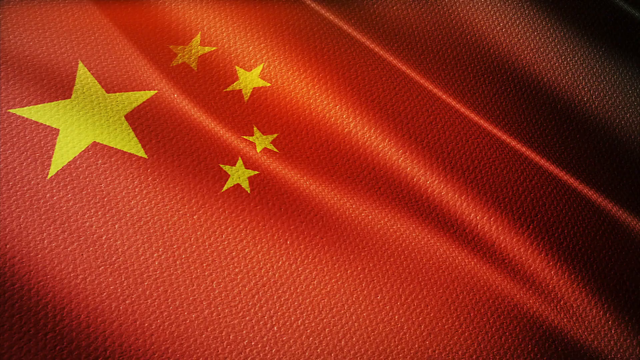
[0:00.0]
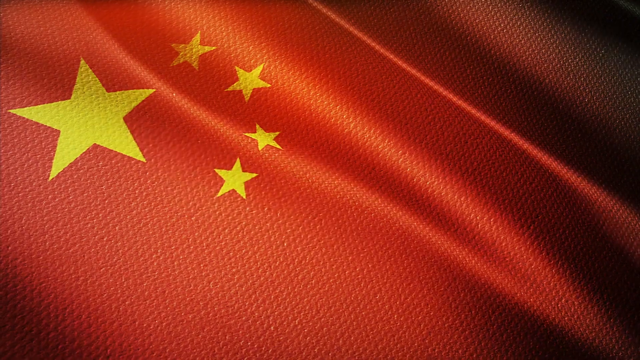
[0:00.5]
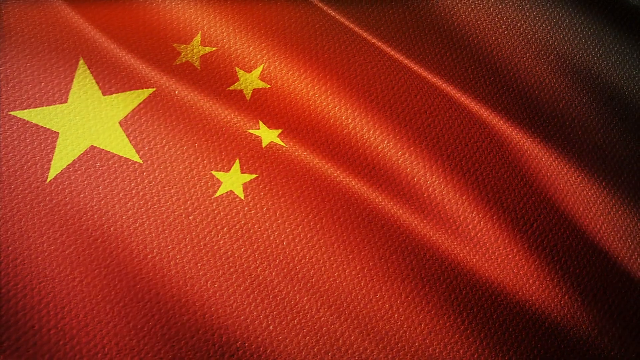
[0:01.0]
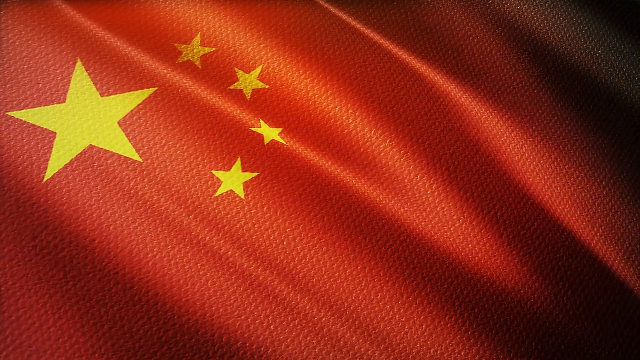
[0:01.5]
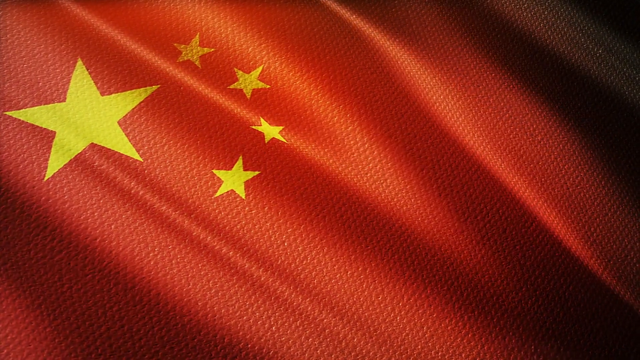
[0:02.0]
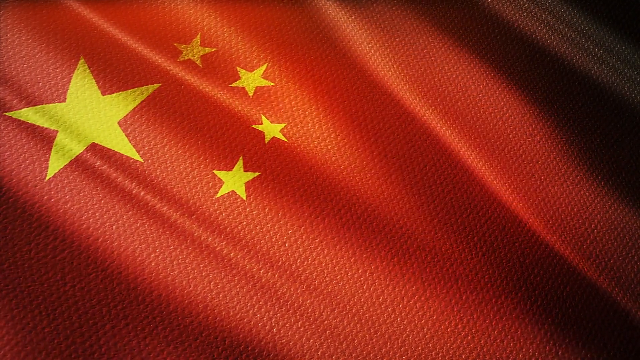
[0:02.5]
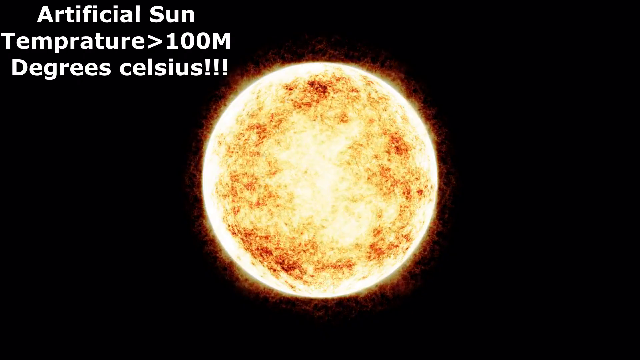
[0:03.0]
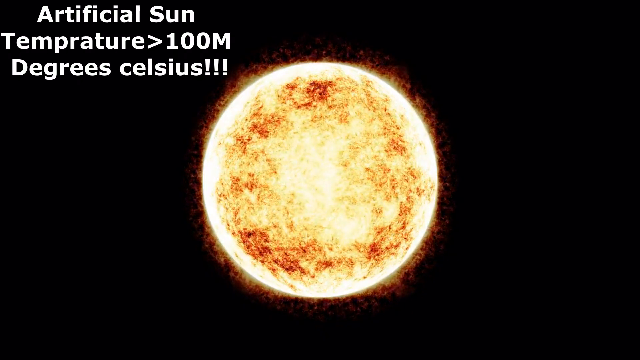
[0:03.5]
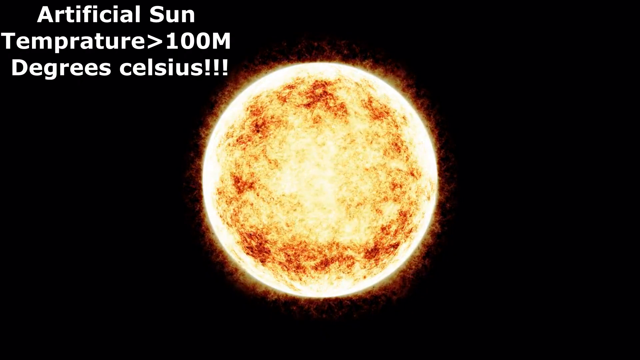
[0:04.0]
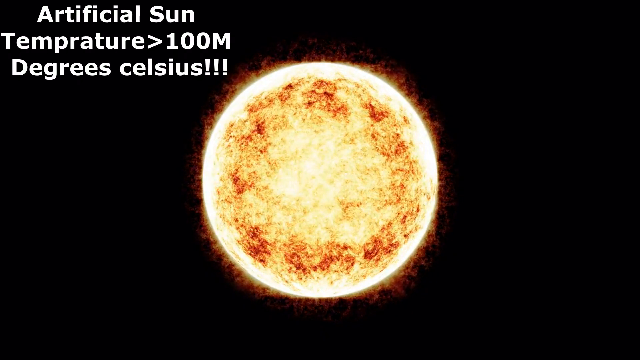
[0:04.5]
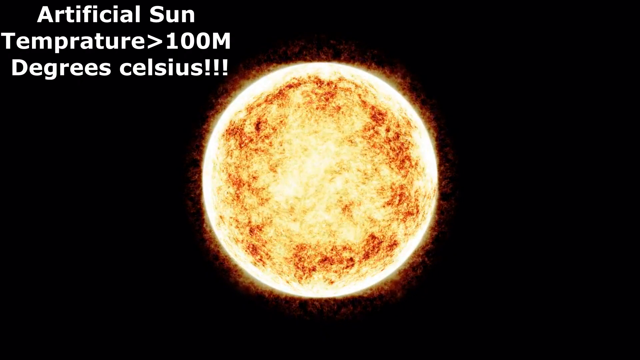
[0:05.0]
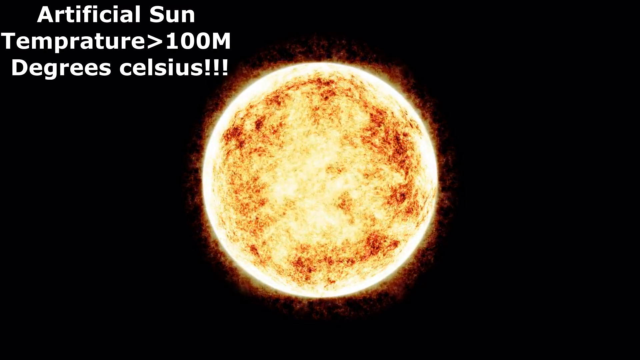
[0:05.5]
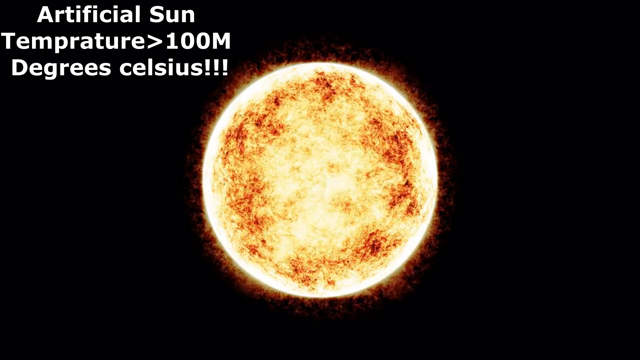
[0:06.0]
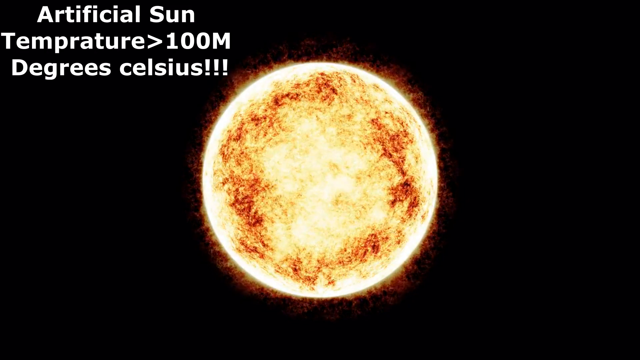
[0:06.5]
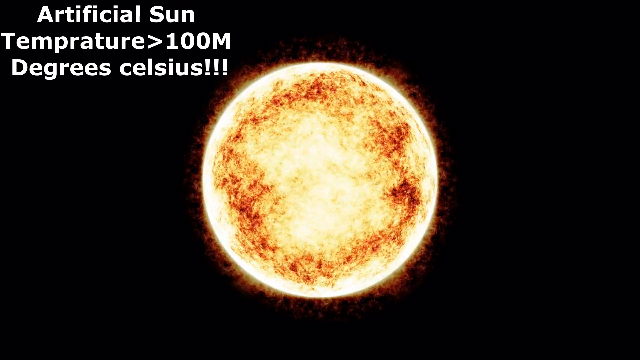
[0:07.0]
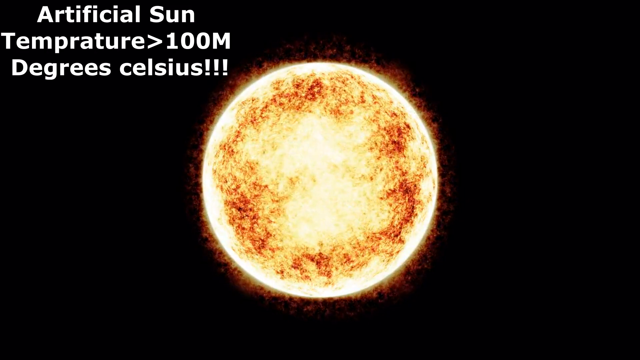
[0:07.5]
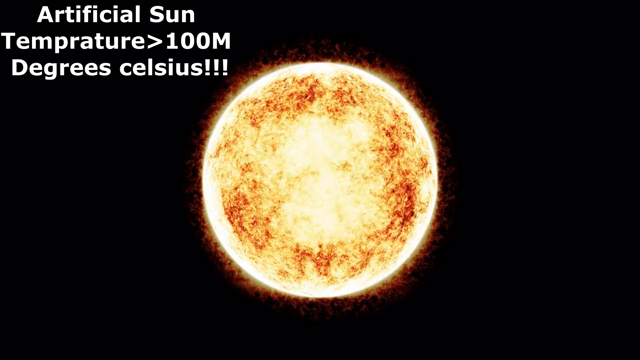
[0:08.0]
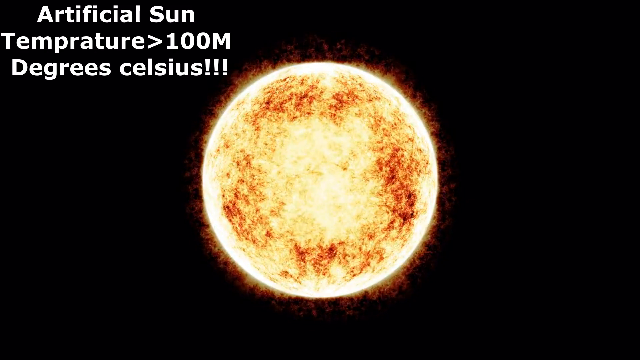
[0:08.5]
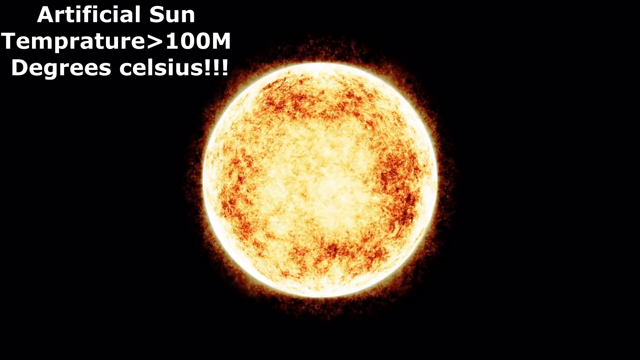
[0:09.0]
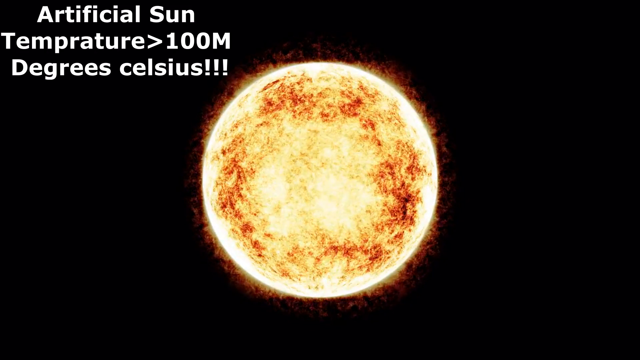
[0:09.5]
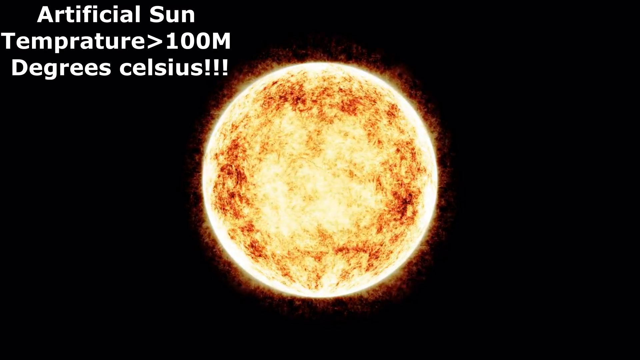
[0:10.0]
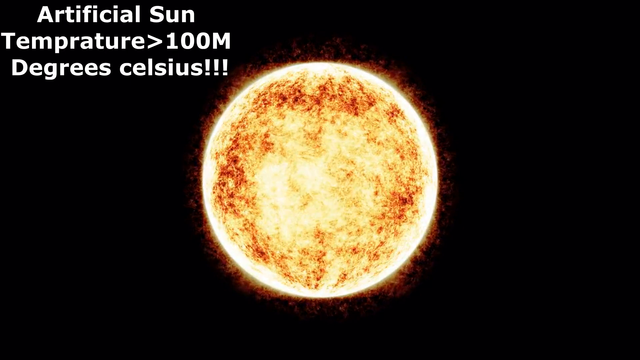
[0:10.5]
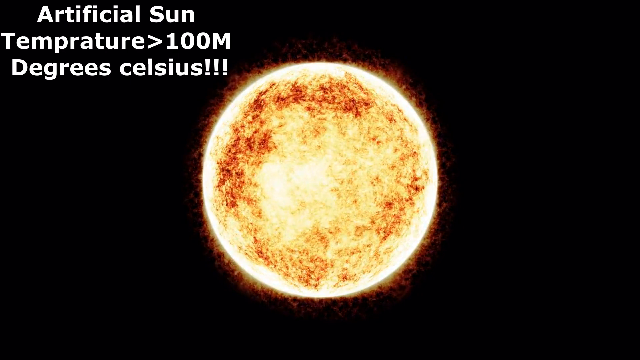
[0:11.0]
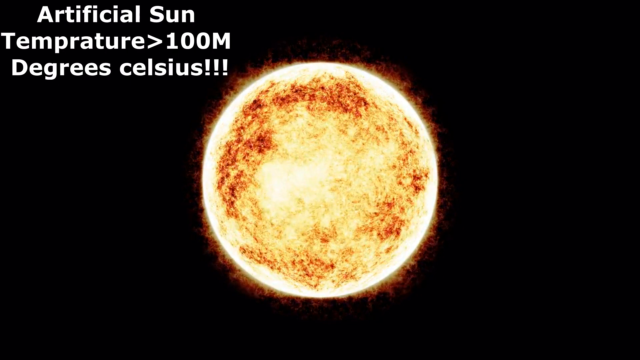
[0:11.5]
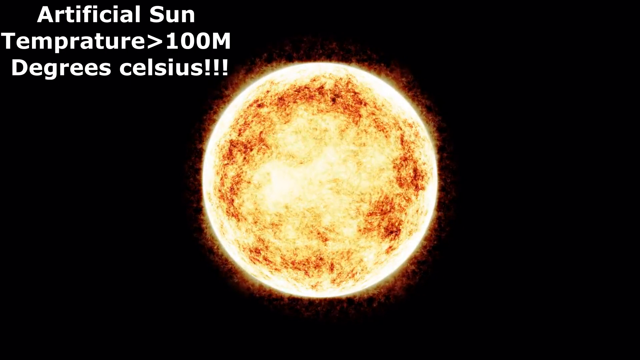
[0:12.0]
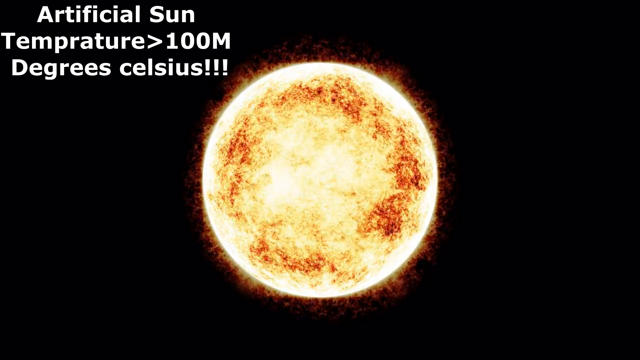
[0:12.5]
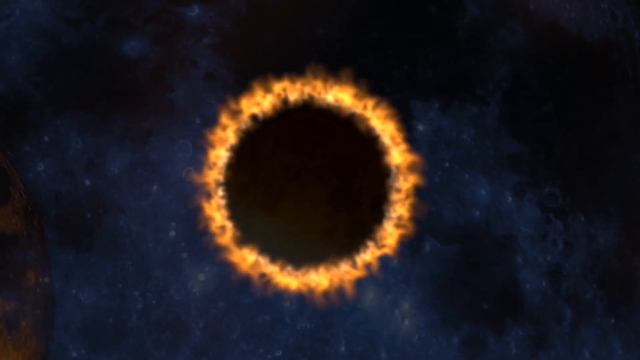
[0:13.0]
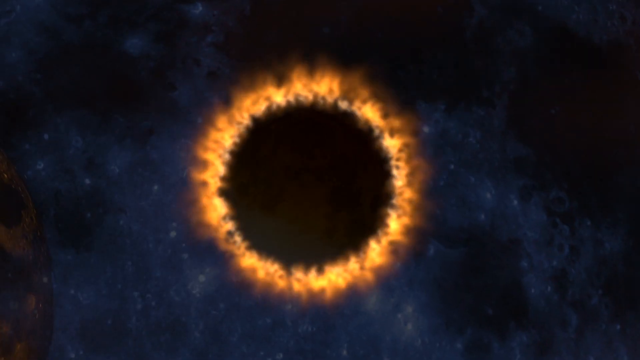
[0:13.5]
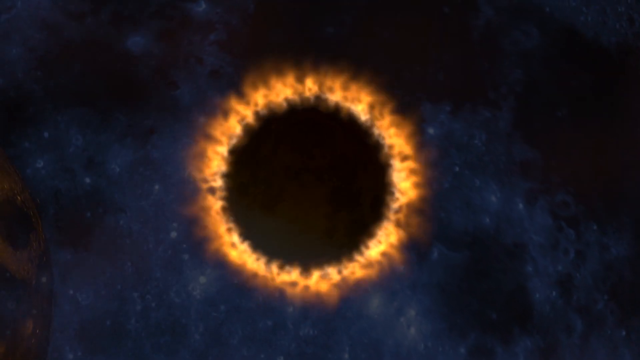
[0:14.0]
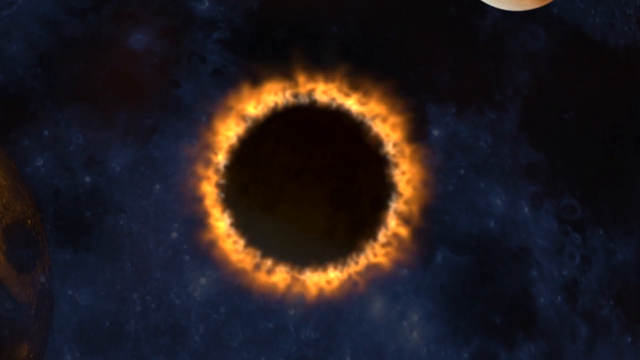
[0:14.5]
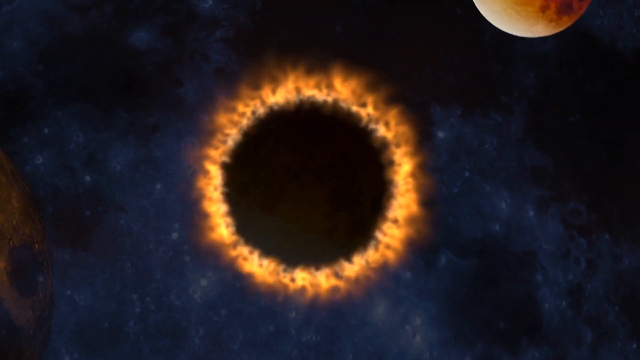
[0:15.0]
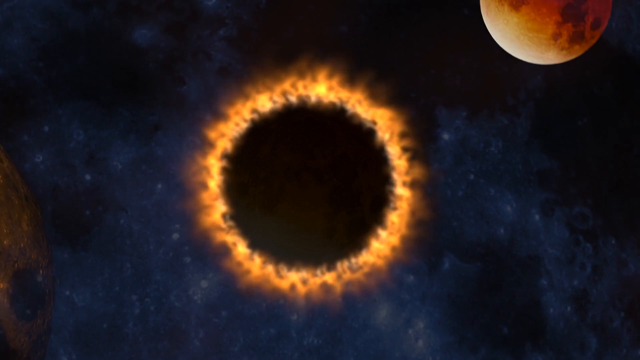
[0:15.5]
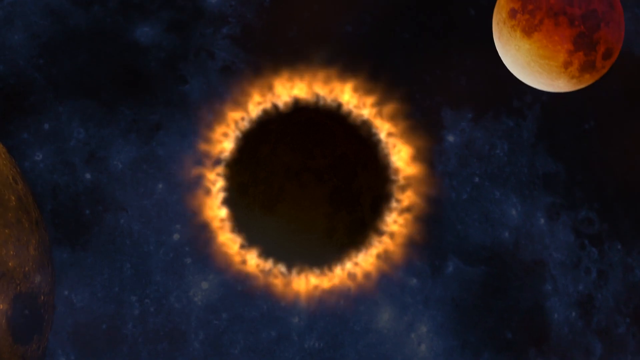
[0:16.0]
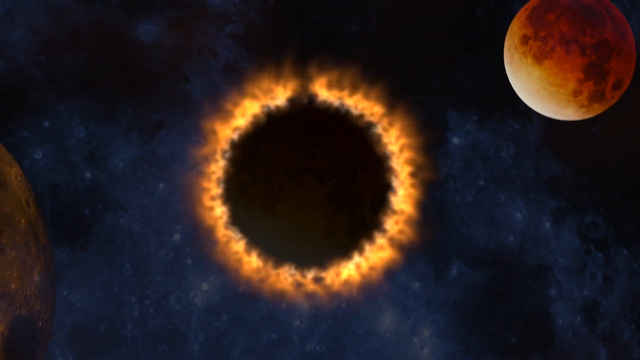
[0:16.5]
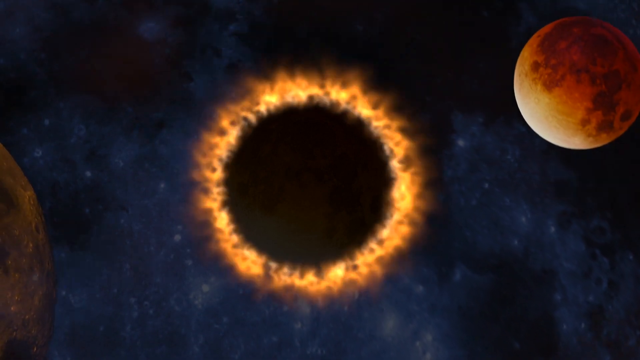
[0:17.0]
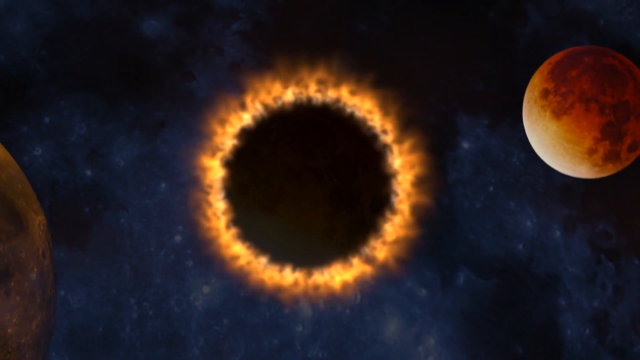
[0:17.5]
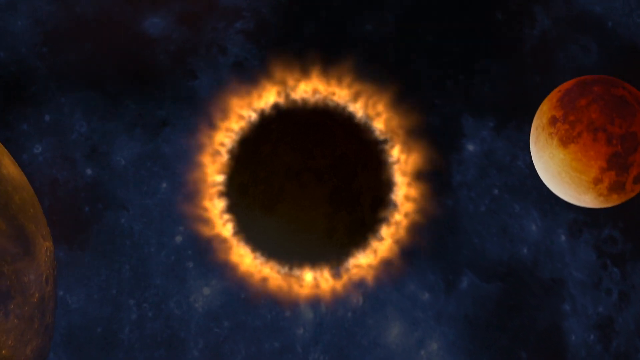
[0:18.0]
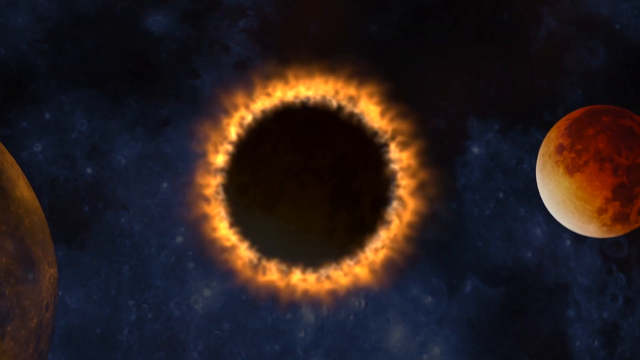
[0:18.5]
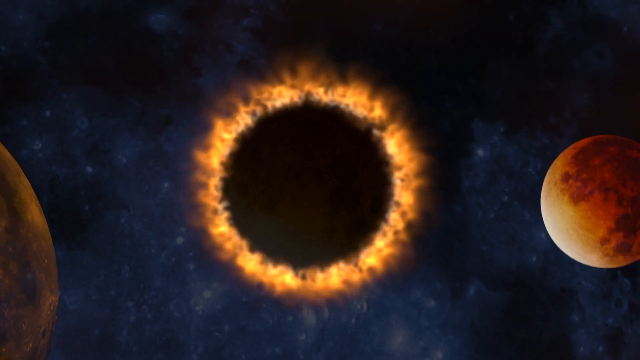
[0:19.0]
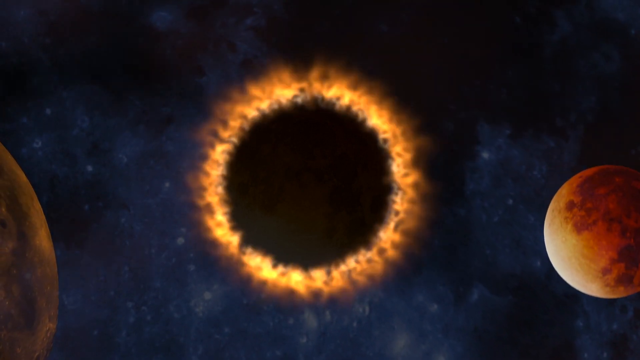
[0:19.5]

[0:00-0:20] The video opens on an up-close view of the Chinese flag filling the background. It is red, with a little black on the right side where shadow comes in. Down from the top left corner is a big yellow star, and to its right four smaller stars come down around in front of it, kind of curling around its right side. The flag moves and waves from the top right down toward the bottom left, seen from different angles. Next comes an all-black background with the sun in the middle. It is very yellow around the outer edge with a slight orange hue coming off it; inward from the outer border it is more of a reddish-orange mix, and the center is more white. In the top left, white text reads "artificial sun, temperature 100 million degrees Celsius." The sun visibly moves, kind of pulsating, and the hue around its outer edges shifts. The video then cuts to a black sun in the middle of a dark blue night sky, like space, with a few white stars. The sun is almost like a black hole, with yellow-orange flame moving around its outside. A bit of a planet comes in from the bottom left, and another planet, mostly yellow with patches of orange and red, comes down from the top almost to the bottom right corner. The one in the left corner looks like it is spinning in a clockwise motion.